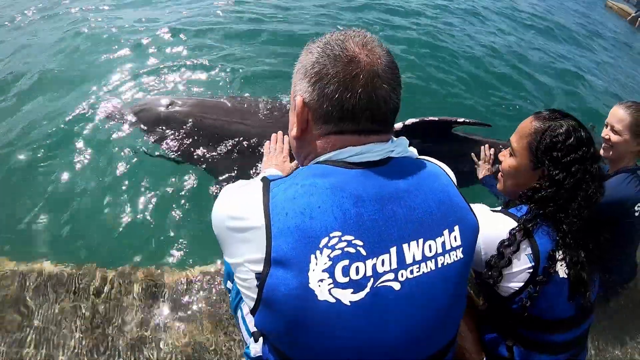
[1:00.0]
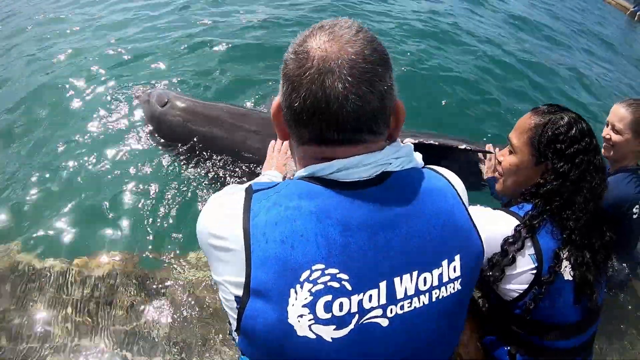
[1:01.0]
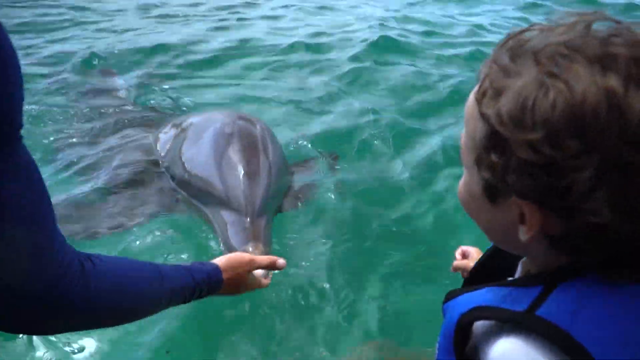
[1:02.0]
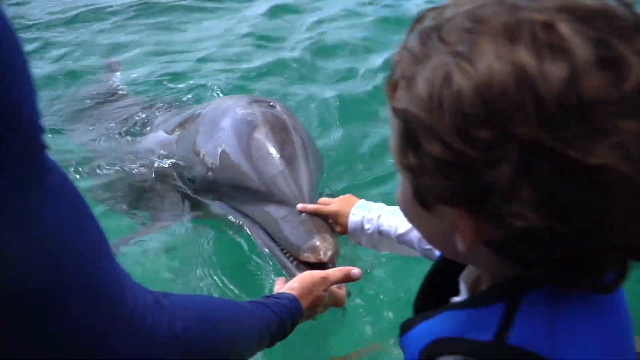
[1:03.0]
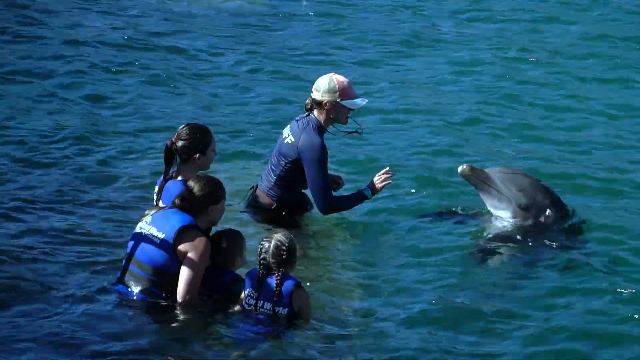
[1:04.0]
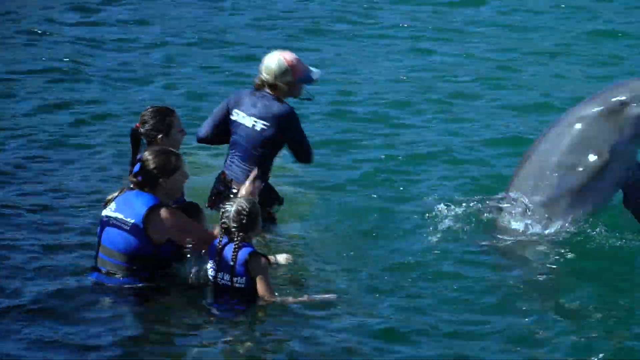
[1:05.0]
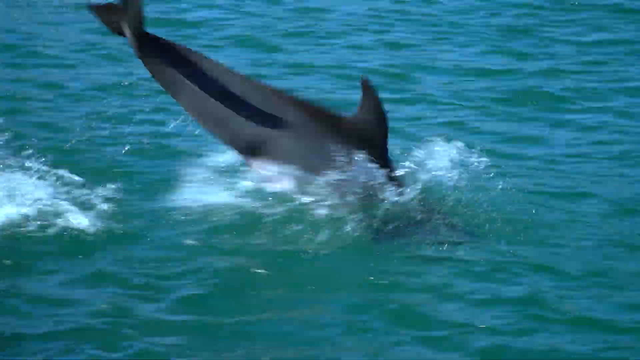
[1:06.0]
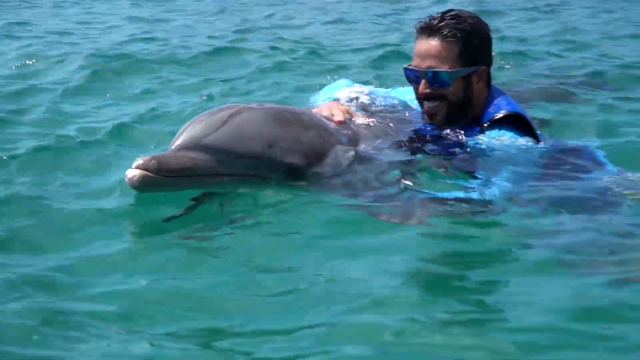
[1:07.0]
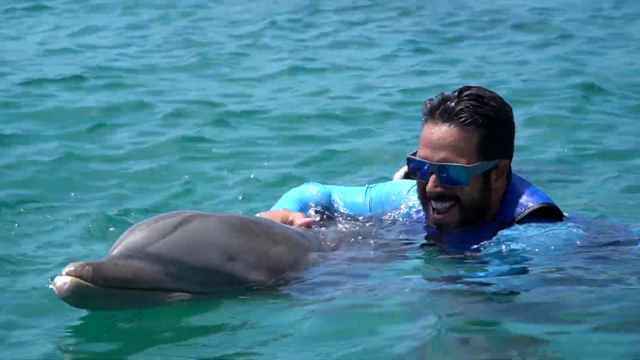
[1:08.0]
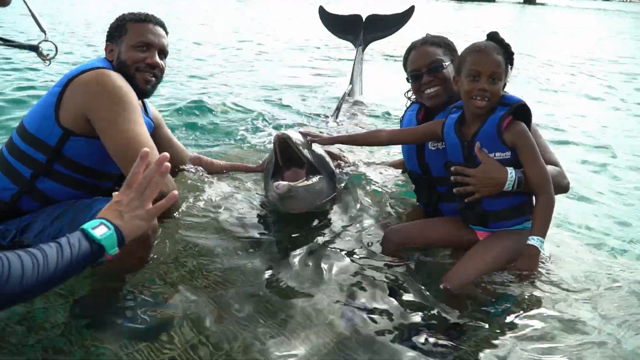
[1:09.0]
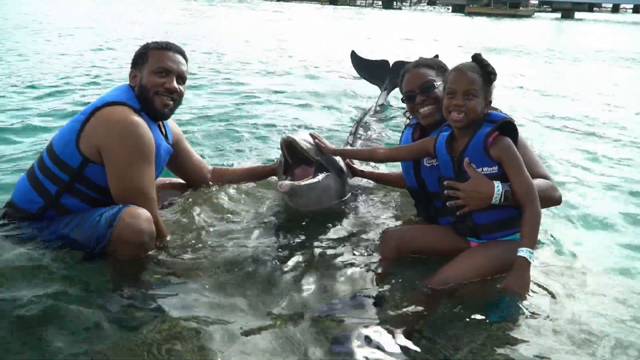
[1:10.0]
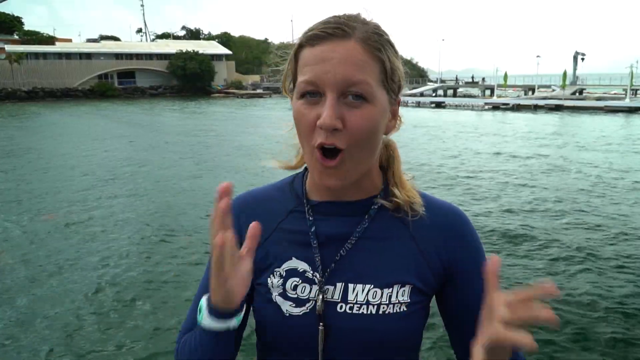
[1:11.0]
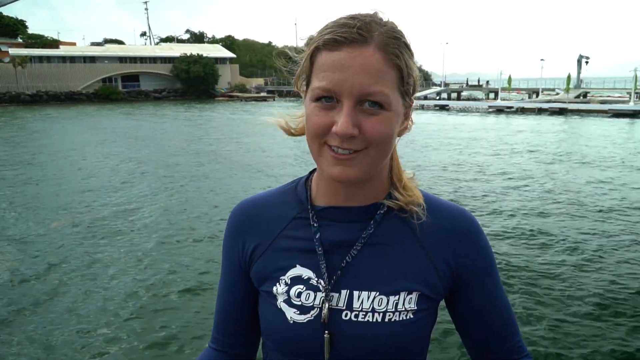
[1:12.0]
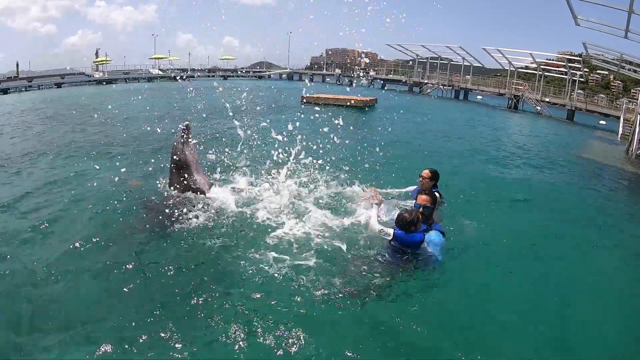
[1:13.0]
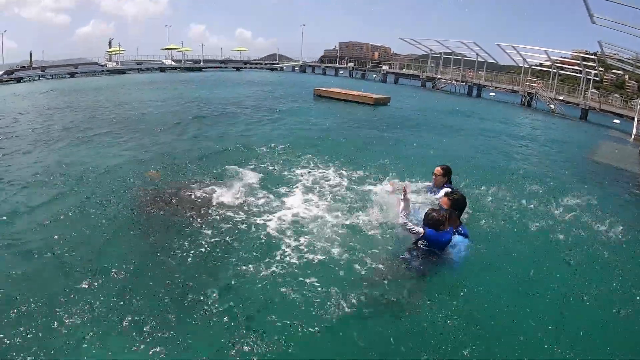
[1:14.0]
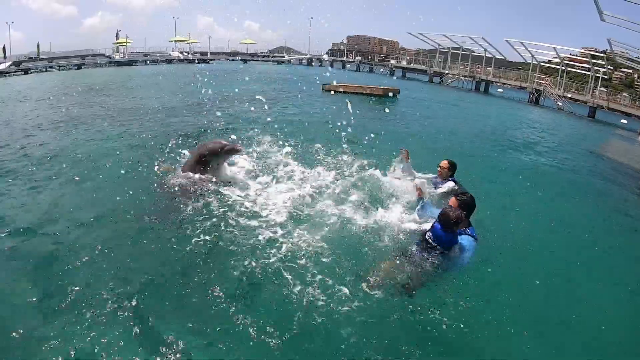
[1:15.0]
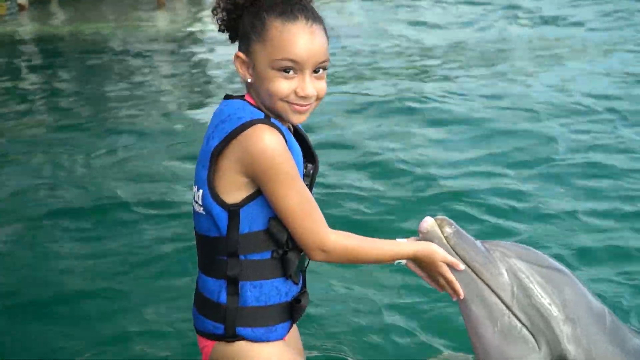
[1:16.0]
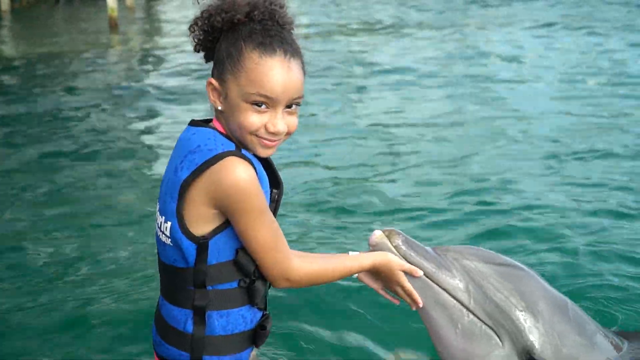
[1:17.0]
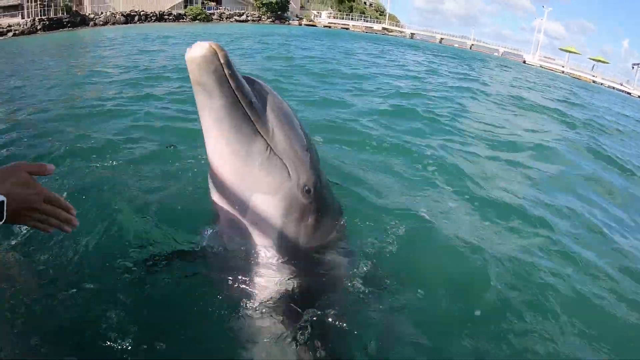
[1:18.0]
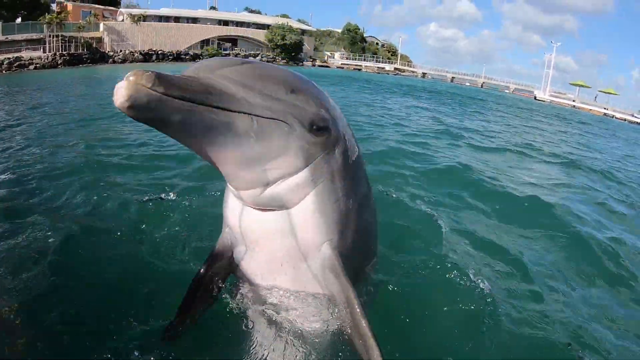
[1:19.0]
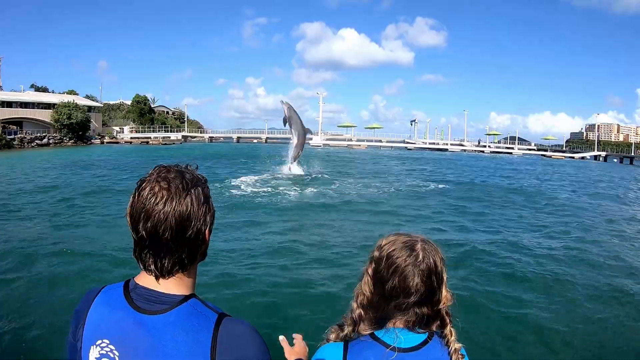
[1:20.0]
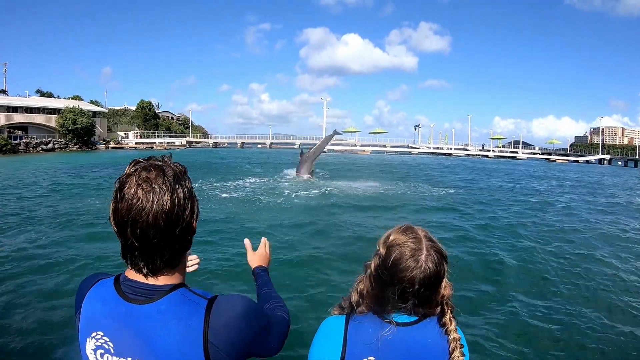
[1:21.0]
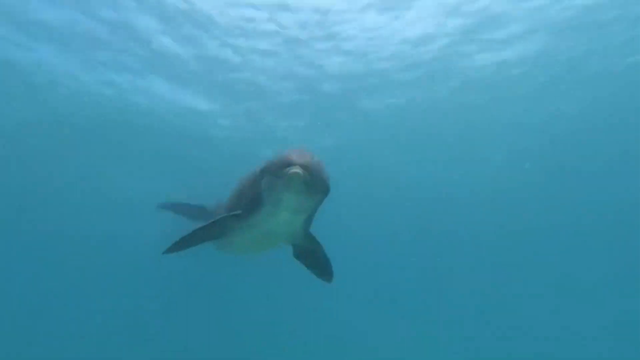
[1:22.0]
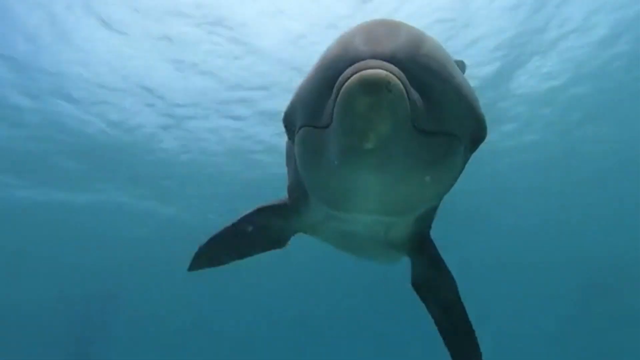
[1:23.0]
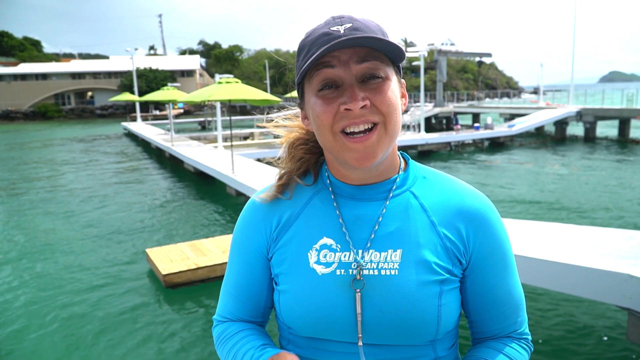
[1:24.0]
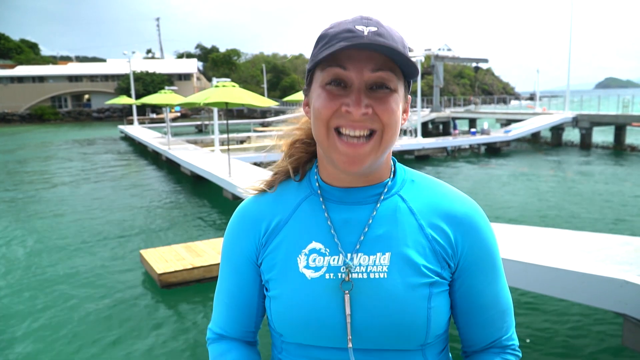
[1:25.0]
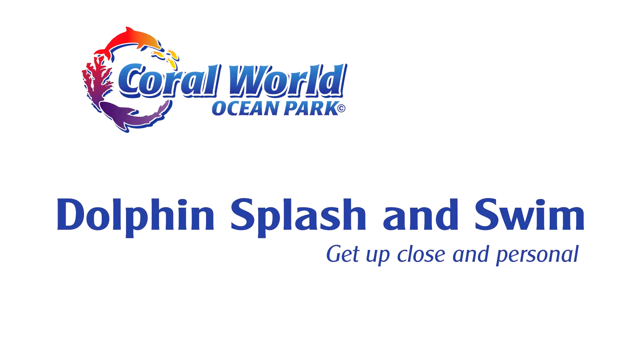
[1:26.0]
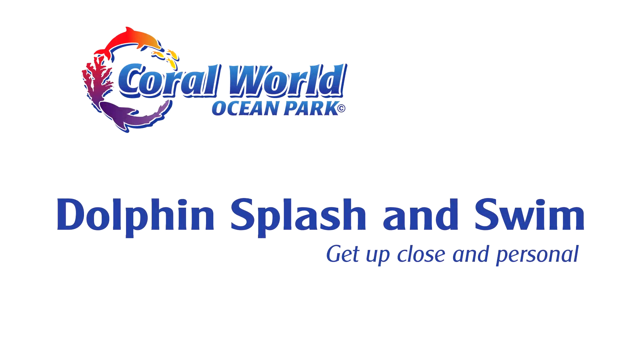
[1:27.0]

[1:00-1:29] Some people crouch down while standing on the platform to pet the dolphin. A very young kid, held by the instructor, touches the mouth of a dolphin in the water while the instructor shows the kid what to do. The instructor then makes a gesture to the dolphin, which jumps out of the water and goes back in. A man wearing sunglasses pets a dolphin swimming with him. Next, a family stands on the platform, partially submerged in the water; near them, partially on the platform, is a dolphin with its mouth open and its tail in the air, and the family poses for a photo. Another shot of the interview with the instructor follows. More people splash water with a dolphin while swimming. A young girl faces the camera and pets a dolphin. Someone gives a high five to the dolphin, and then, with the dolphin a bit further out in the water, it jumps out while the people watching clap their hands. An underwater shot shows a dolphin coming very close to the camera and swimming close to it. Another shot shows the instructor talking to the camera. Finally, the video changes to a white background with the Coral World logo and the text "Dolphins Splash and Swim, get up close and personal".